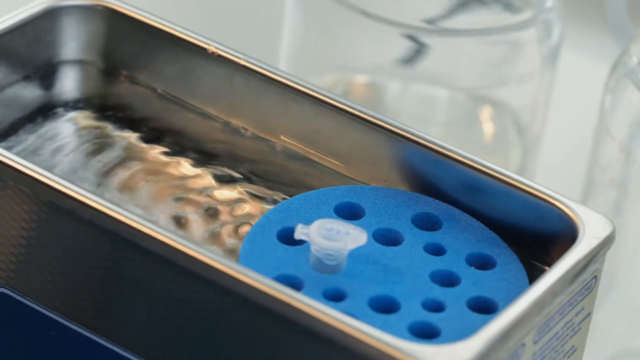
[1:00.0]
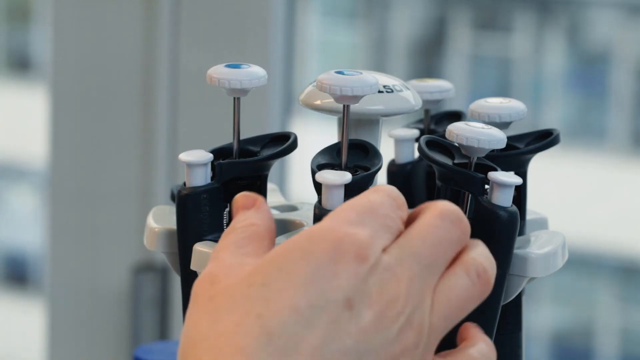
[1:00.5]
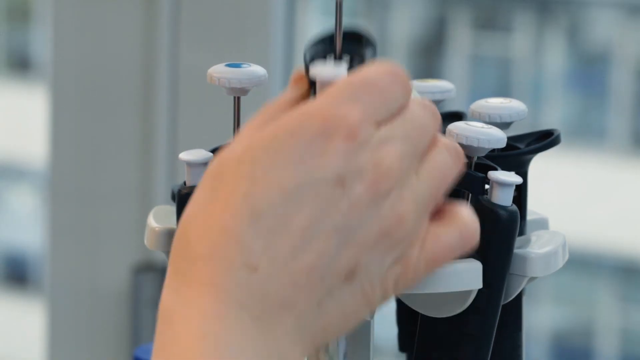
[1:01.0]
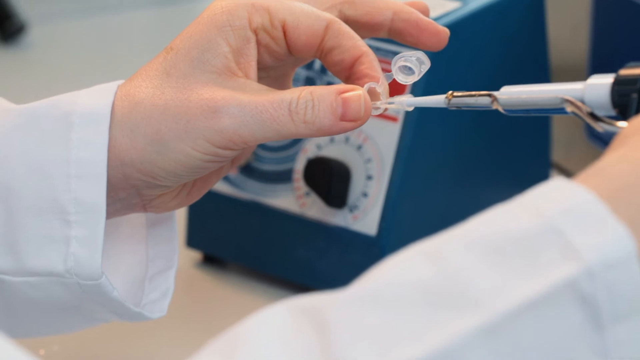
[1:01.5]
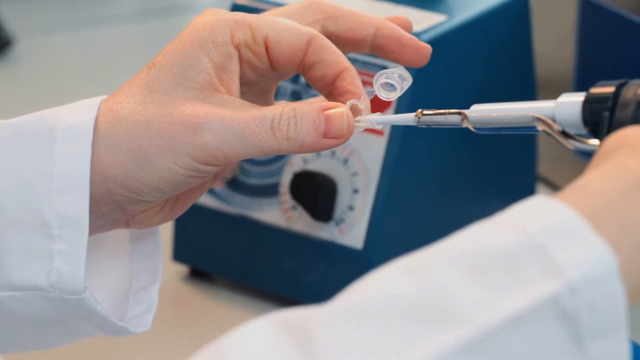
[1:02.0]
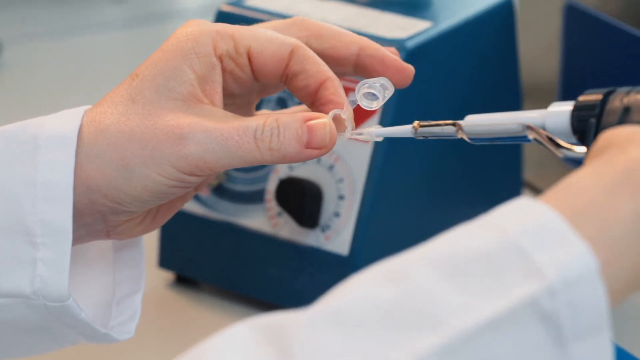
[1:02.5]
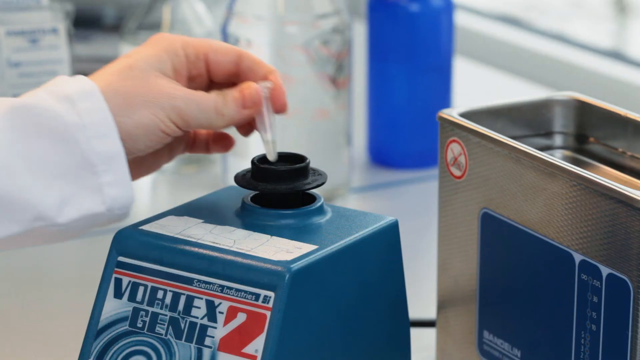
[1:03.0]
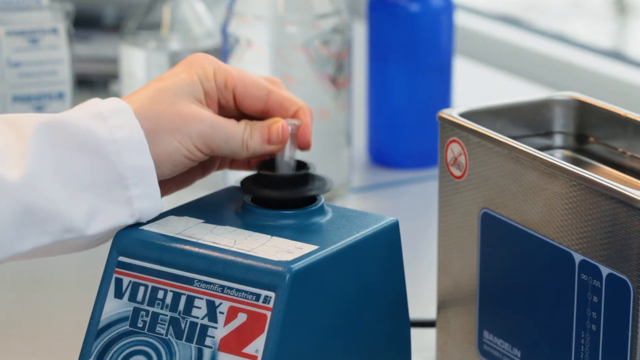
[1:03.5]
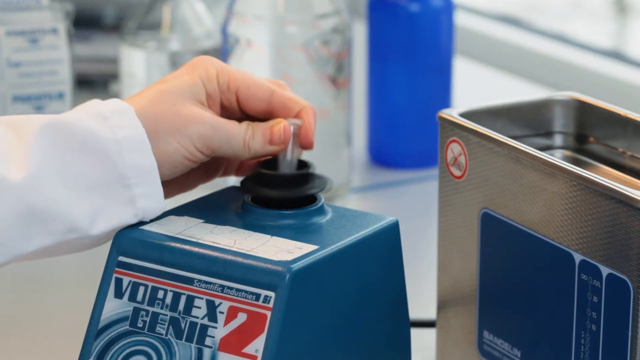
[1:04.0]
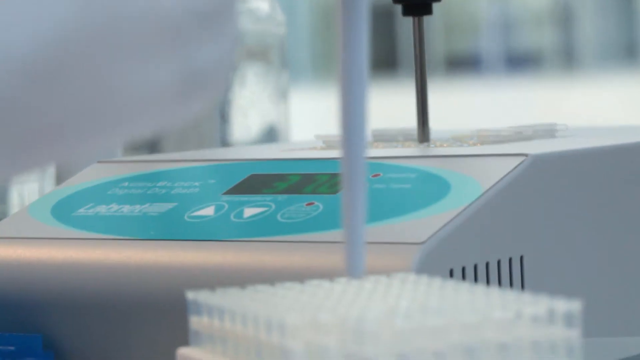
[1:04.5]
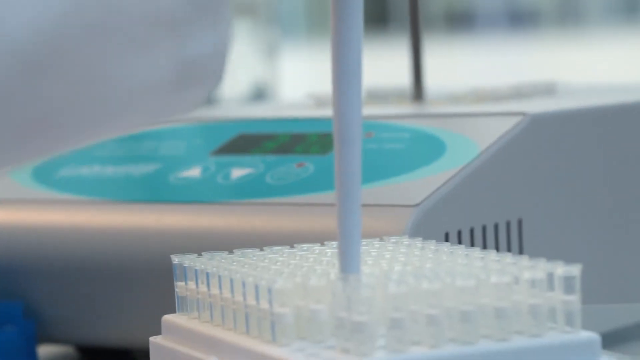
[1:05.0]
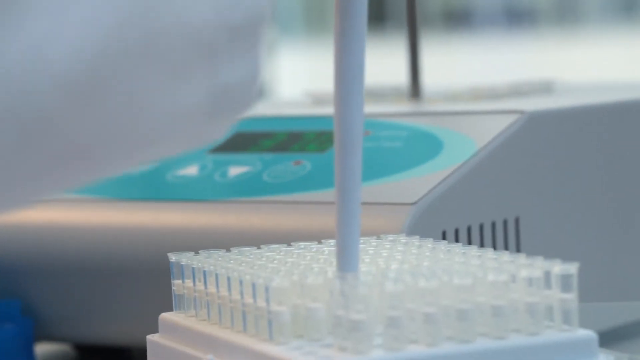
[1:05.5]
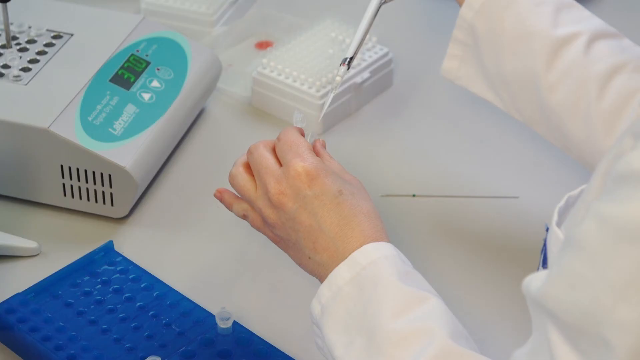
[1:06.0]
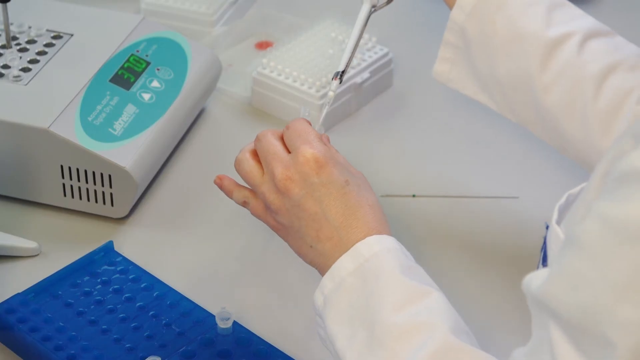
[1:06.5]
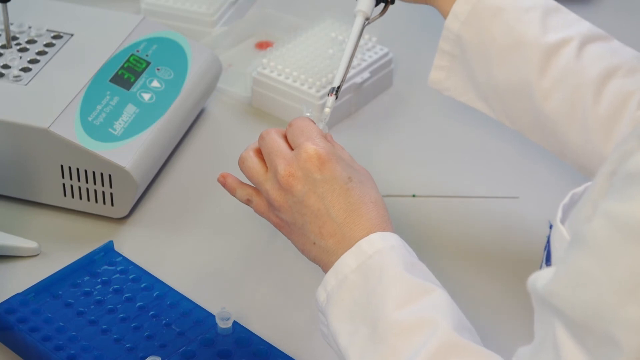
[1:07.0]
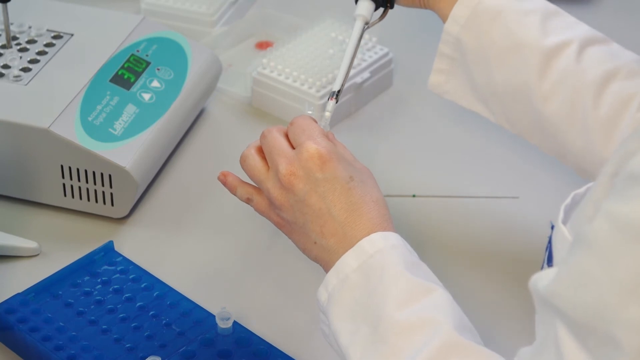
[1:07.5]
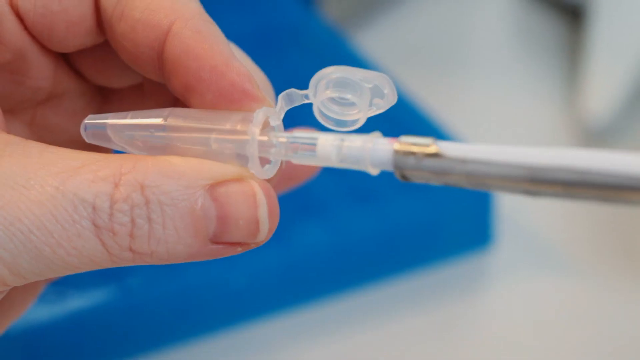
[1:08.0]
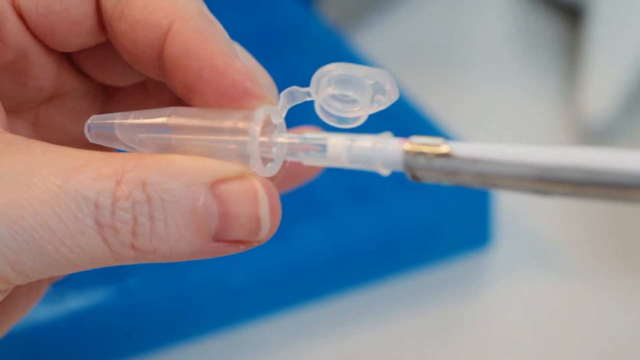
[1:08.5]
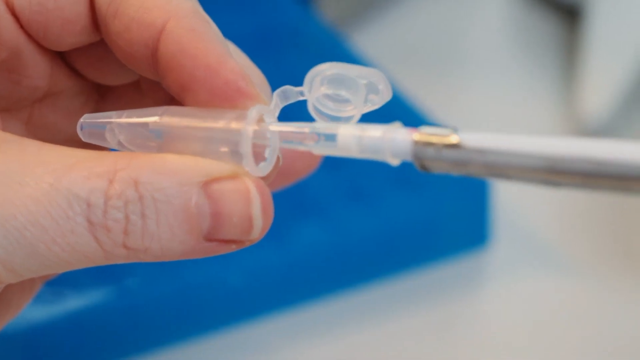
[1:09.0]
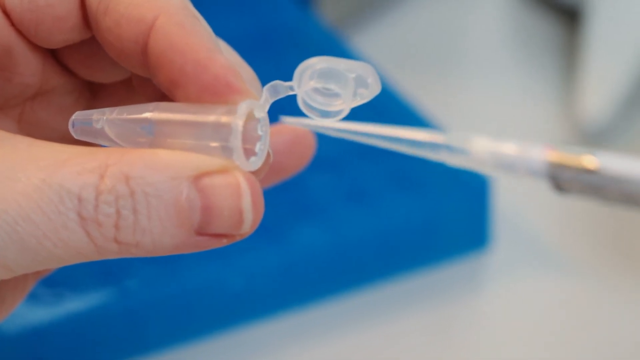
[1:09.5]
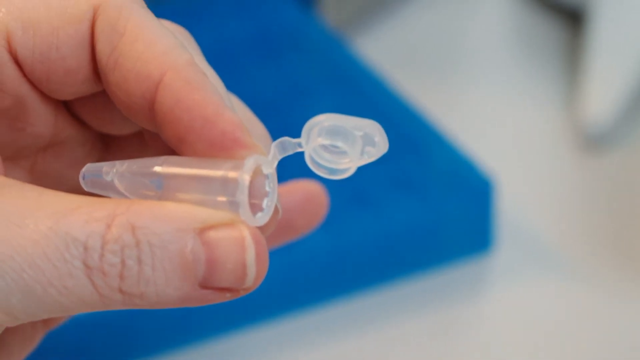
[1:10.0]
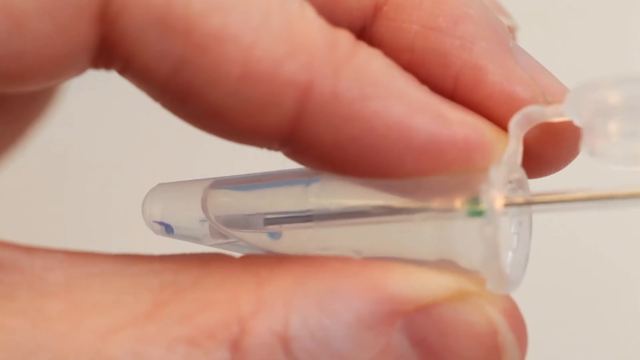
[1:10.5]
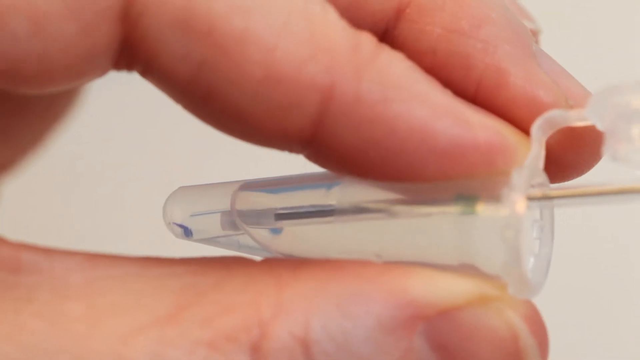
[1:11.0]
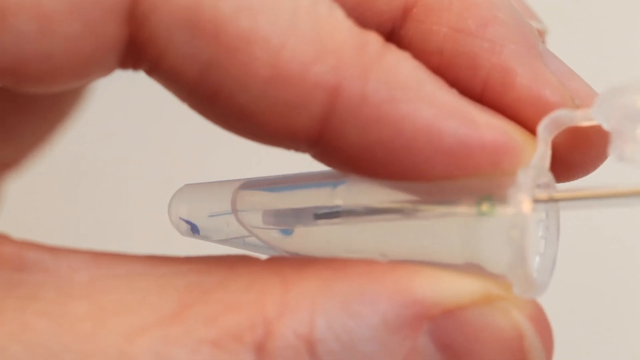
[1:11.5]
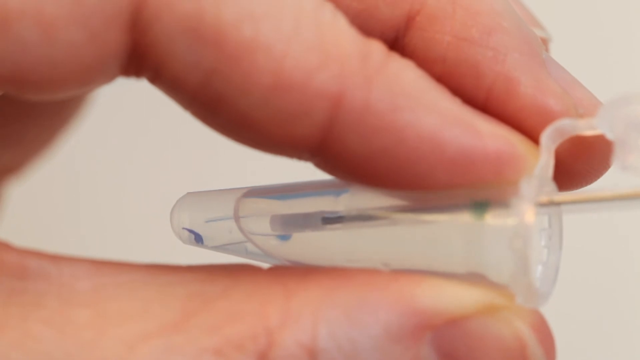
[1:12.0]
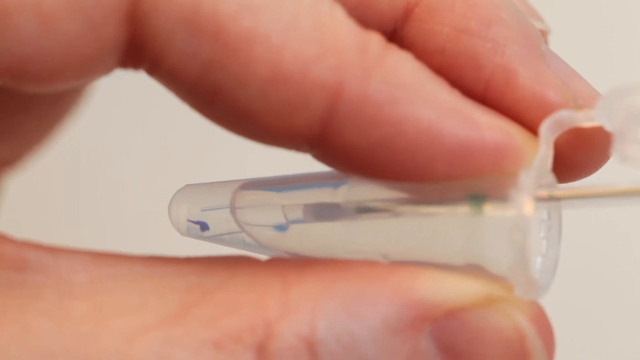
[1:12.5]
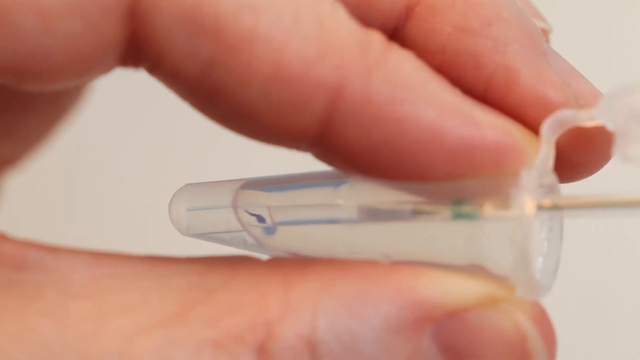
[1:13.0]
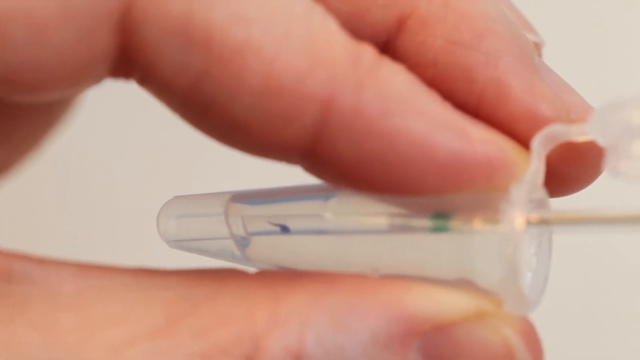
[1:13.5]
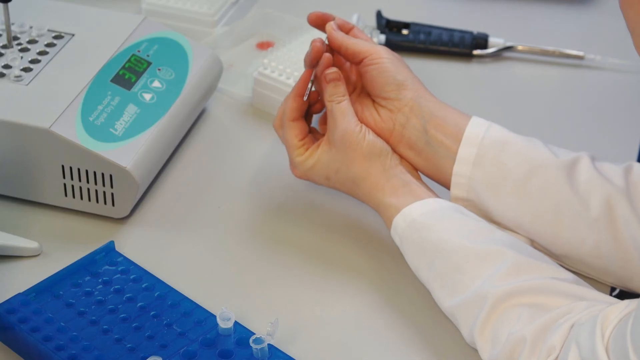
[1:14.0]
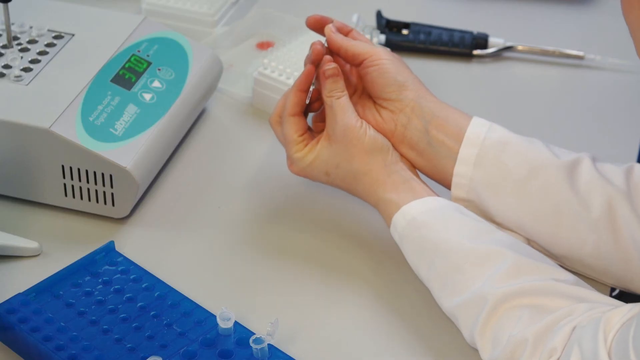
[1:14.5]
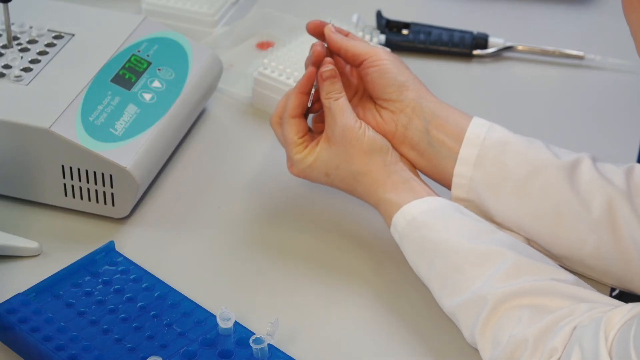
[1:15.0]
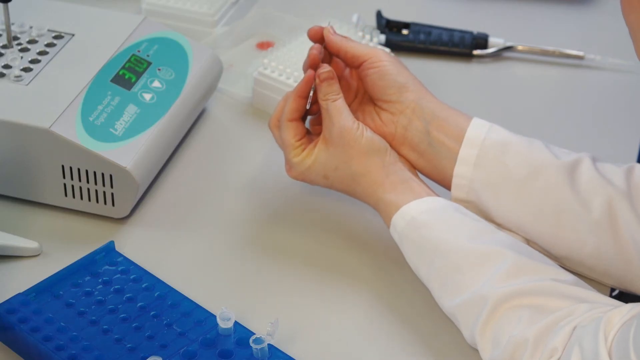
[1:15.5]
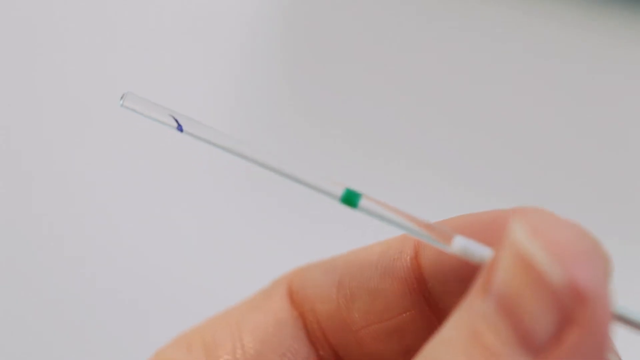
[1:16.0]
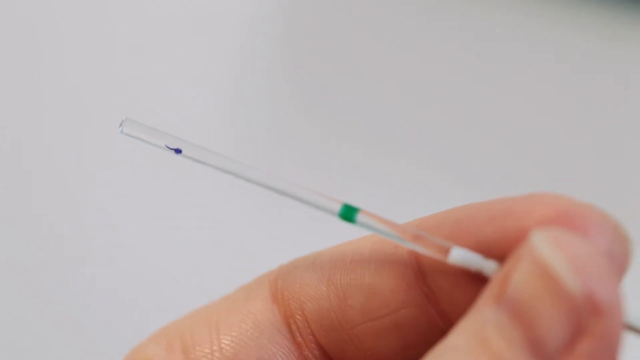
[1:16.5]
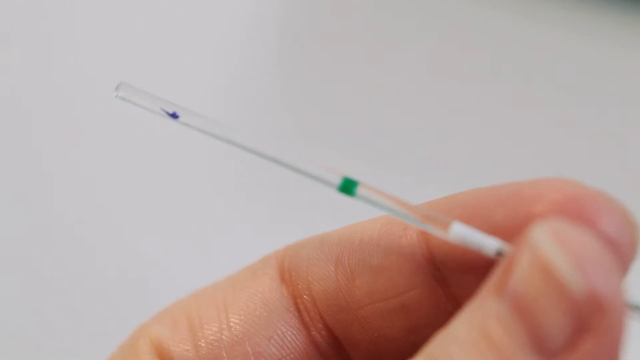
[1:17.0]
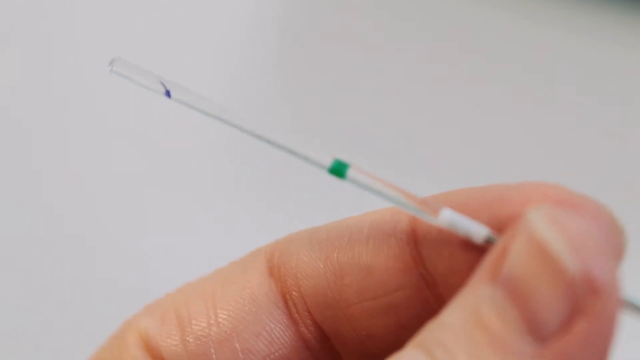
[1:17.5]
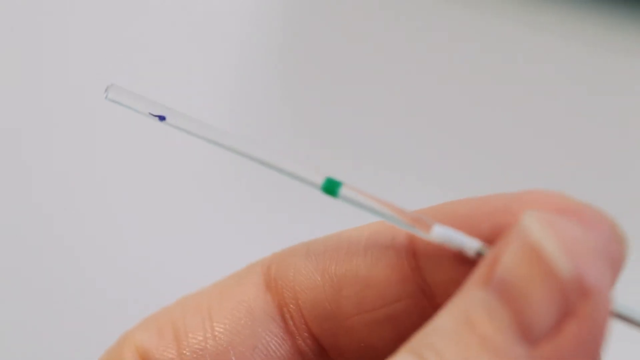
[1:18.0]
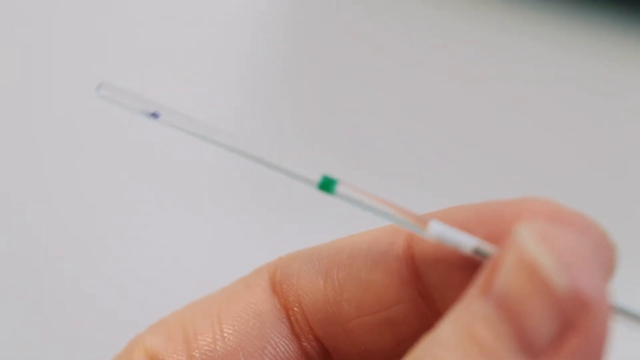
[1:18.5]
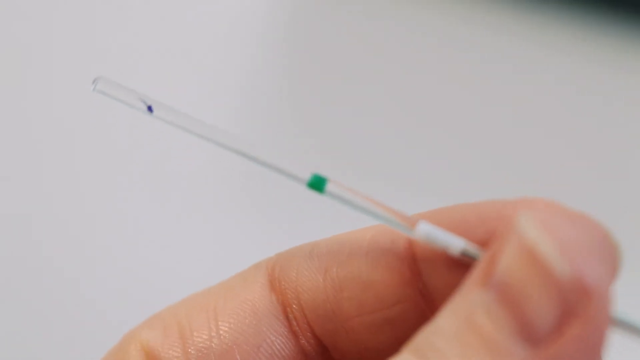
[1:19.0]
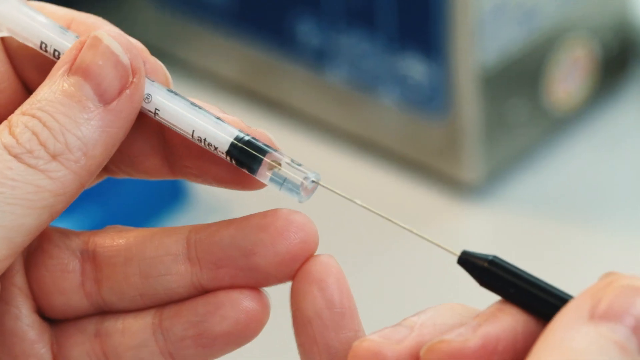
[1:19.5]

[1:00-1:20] Somebody's hand comes up from the bottom of the frame, grabbing at items that stick up in the background; they are black and white. The hand grabs one of them. From a different angle, looking down, the scientist's hand and the edge of the white lab coat are on the left, holding the small, clear tube, while on the right he holds the item he just picked up: a long, black and white, almost needle-like device, which he very slowly puts into the small white tube he is holding. The video returns to the Vortex machine, a blue square machine with a black opening on top; he puts the vial into it, and the machine is kind of shaking a bit as he does. Next he holds a long, white cylinder of some sort in the center of the screen. A high-level view from the top shows him holding the white, long item that almost looks like a long needle in his right hand and putting it into the very small, thin, clear tube held in his left hand. A very zoomed-in close-up shows the needle and the tube both held parallel, and he takes the needle out. Another close-up shows him putting the needle in and taking it out. An overview then shows the person holding the vial with both hands as he continues the same motion, putting the needle into the vial and taking it out.